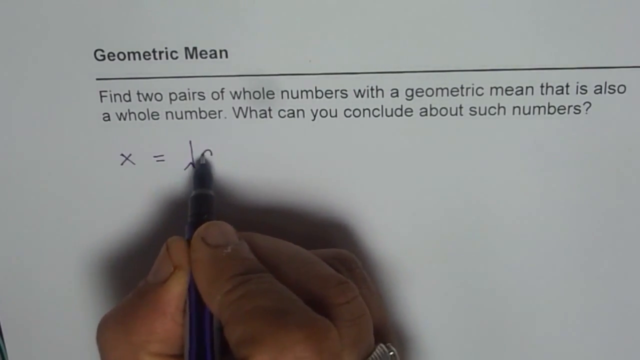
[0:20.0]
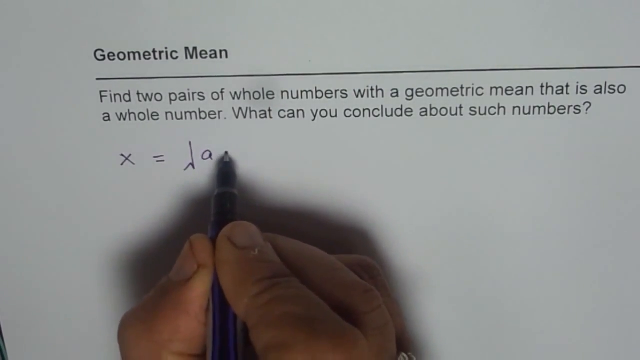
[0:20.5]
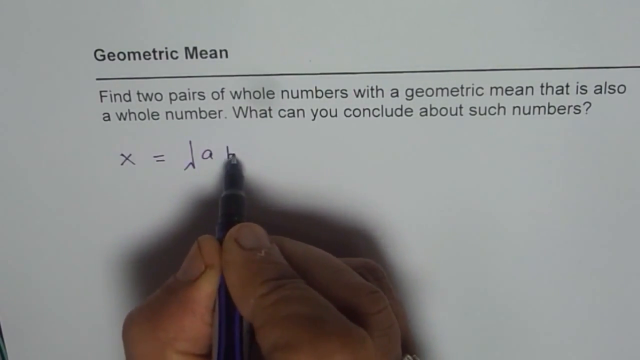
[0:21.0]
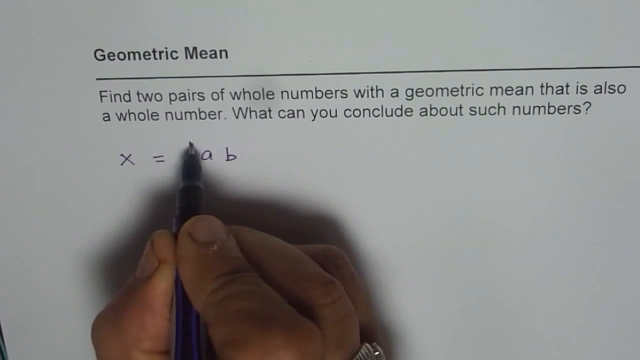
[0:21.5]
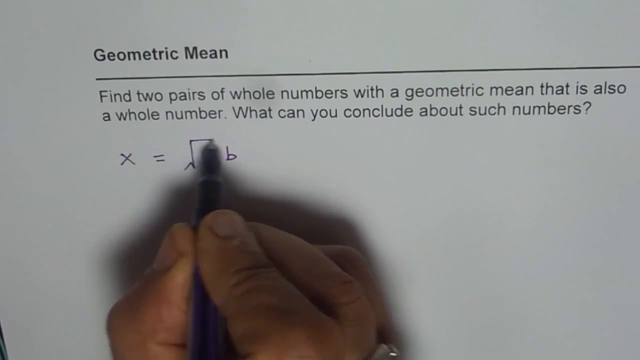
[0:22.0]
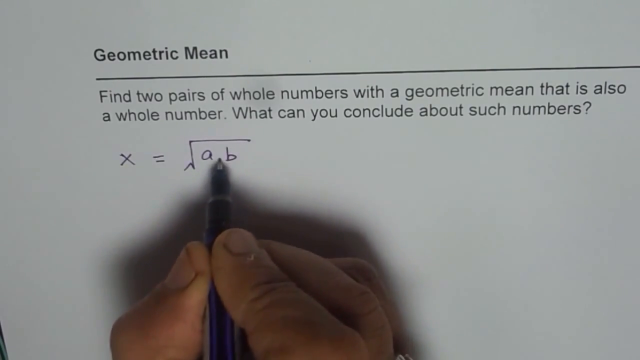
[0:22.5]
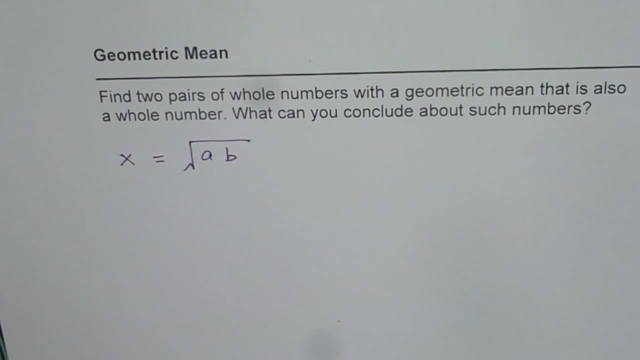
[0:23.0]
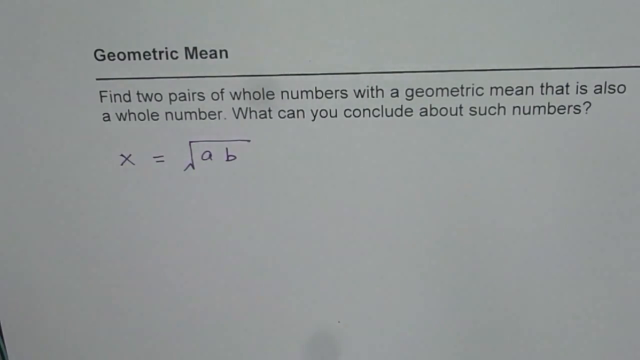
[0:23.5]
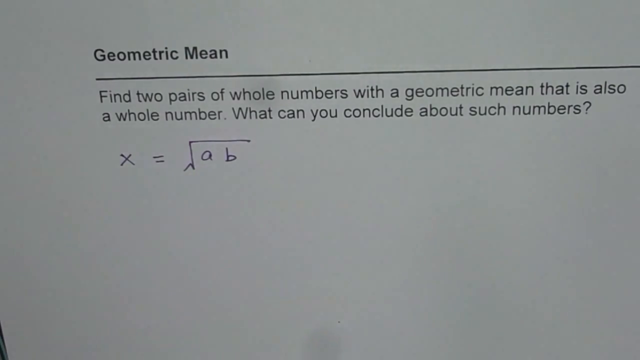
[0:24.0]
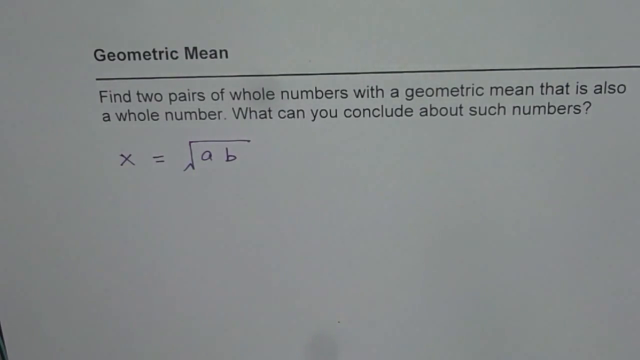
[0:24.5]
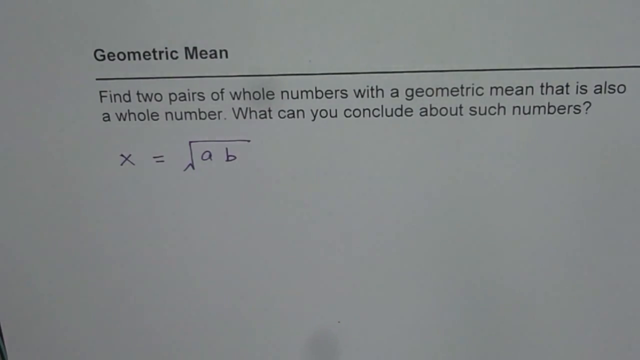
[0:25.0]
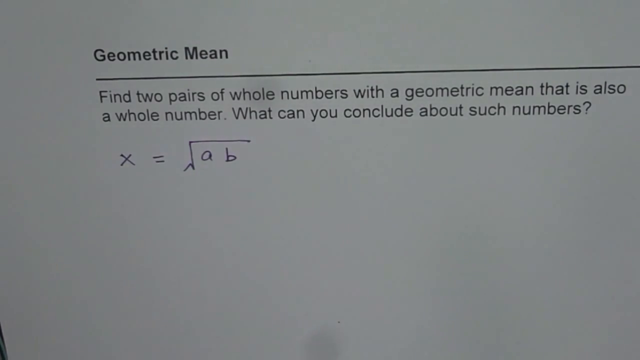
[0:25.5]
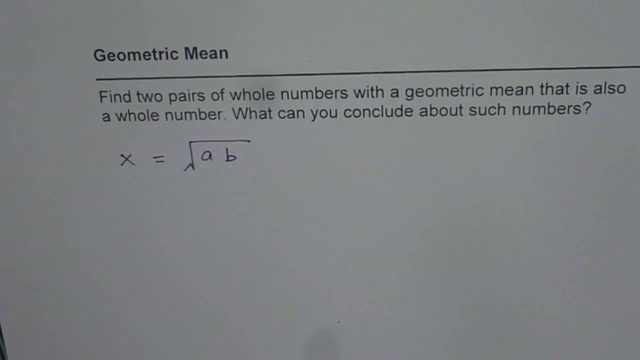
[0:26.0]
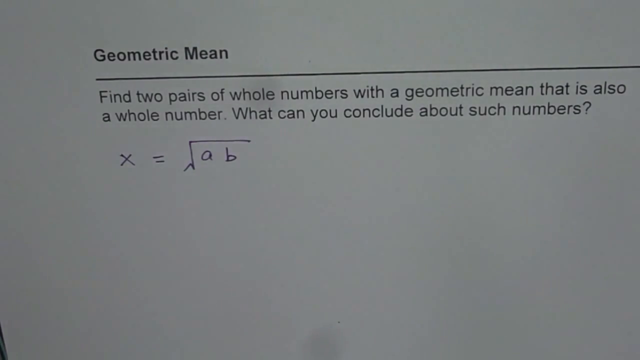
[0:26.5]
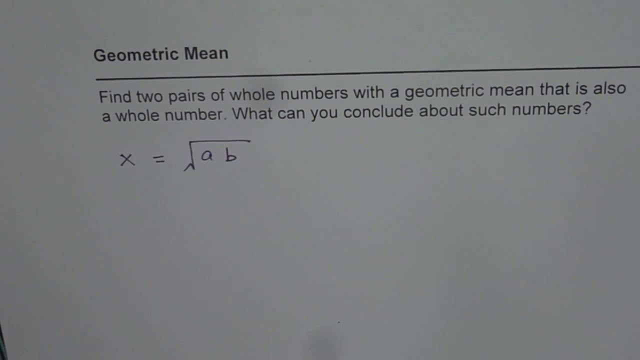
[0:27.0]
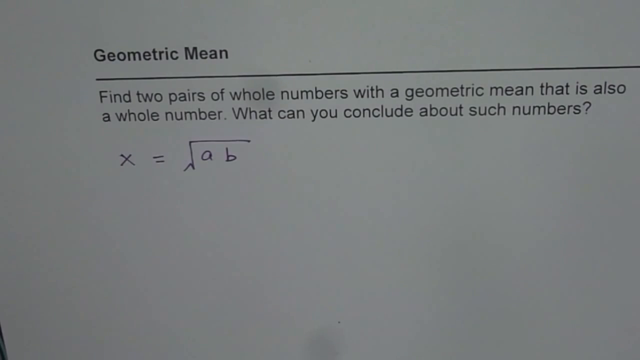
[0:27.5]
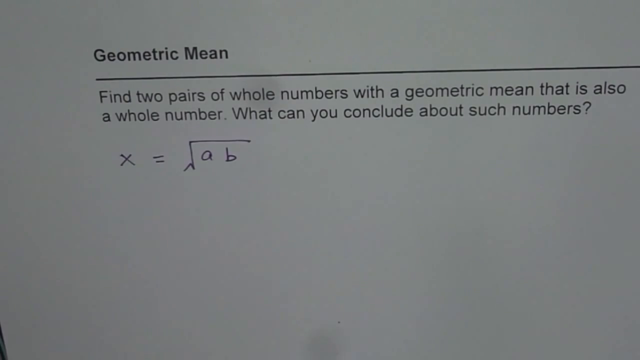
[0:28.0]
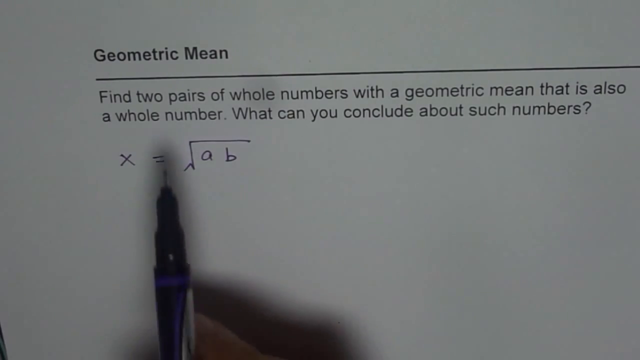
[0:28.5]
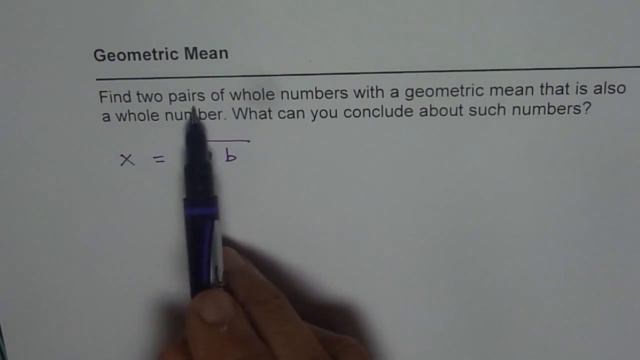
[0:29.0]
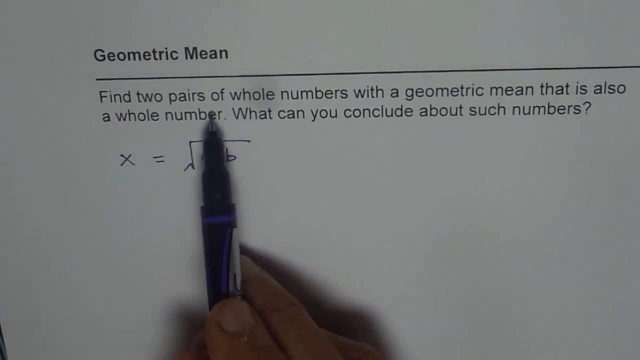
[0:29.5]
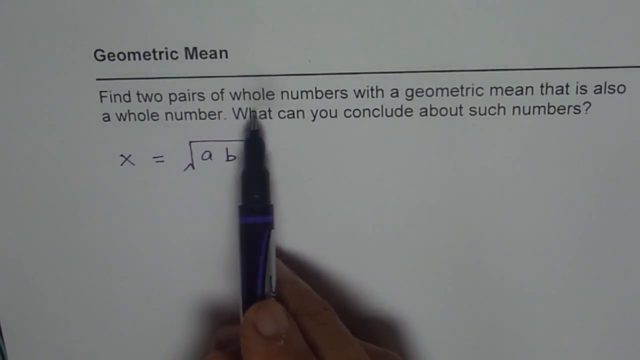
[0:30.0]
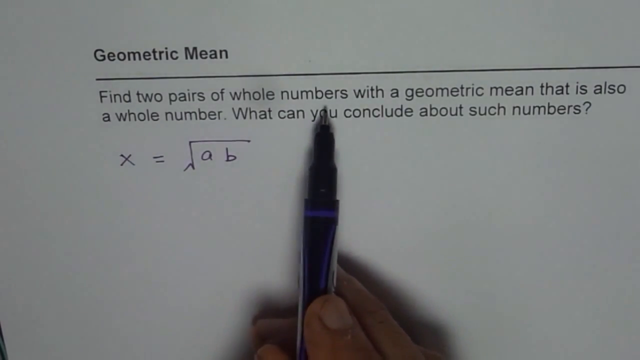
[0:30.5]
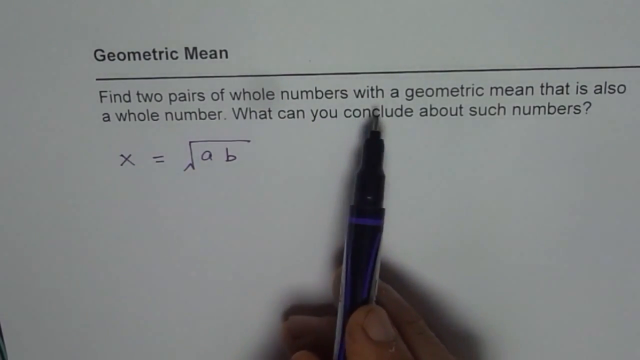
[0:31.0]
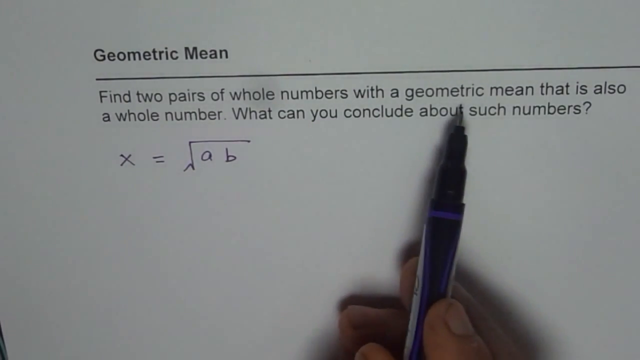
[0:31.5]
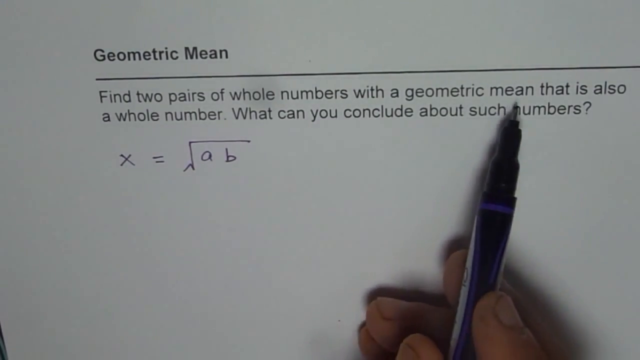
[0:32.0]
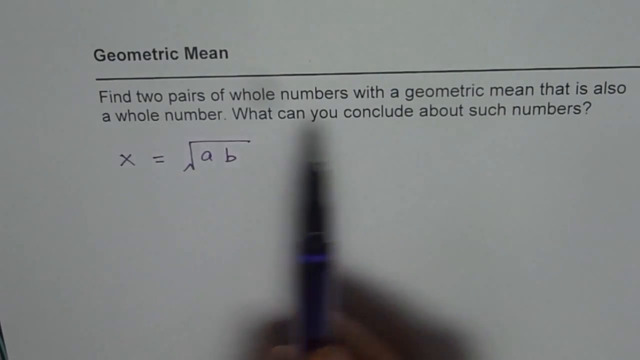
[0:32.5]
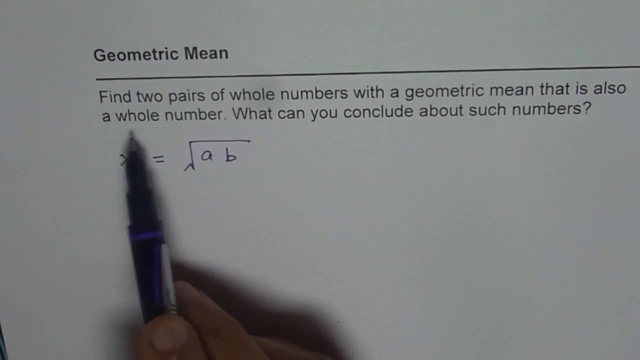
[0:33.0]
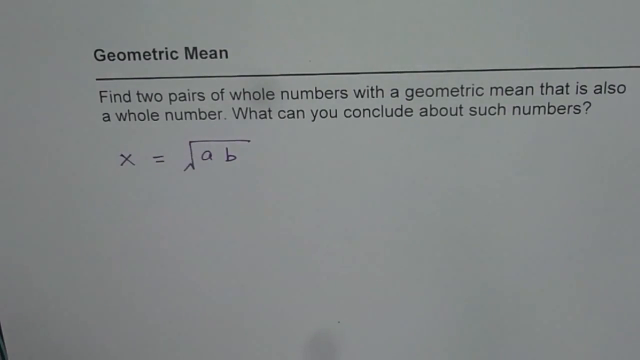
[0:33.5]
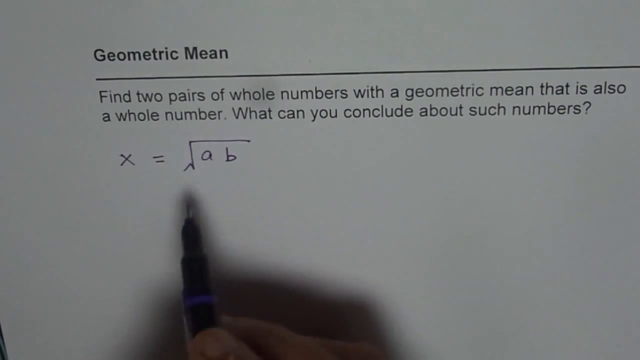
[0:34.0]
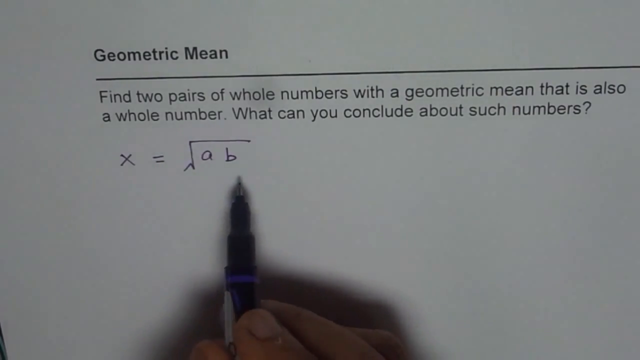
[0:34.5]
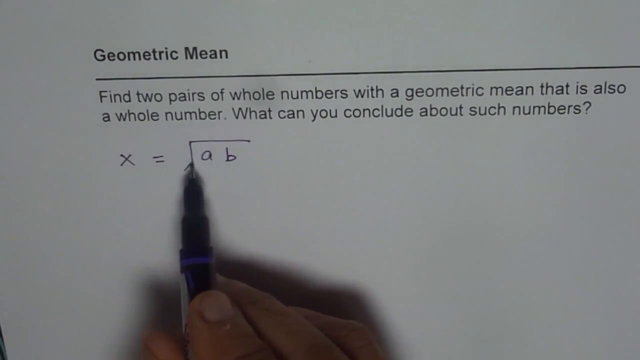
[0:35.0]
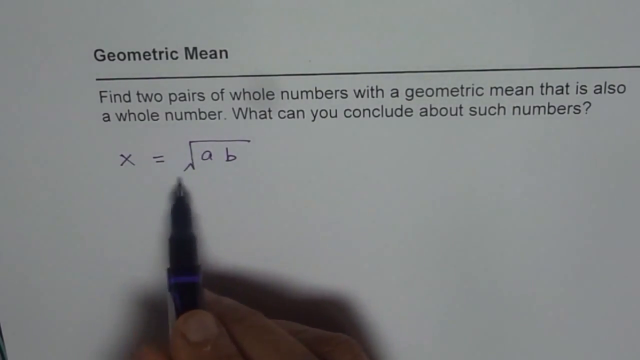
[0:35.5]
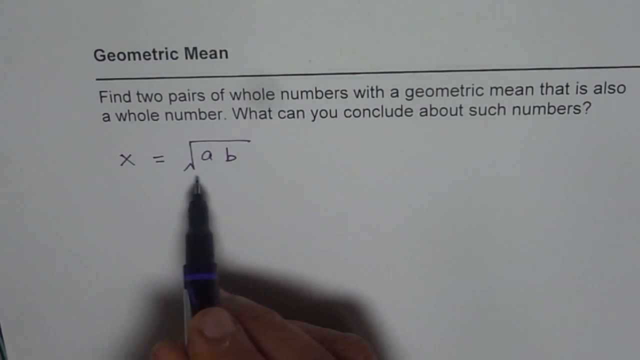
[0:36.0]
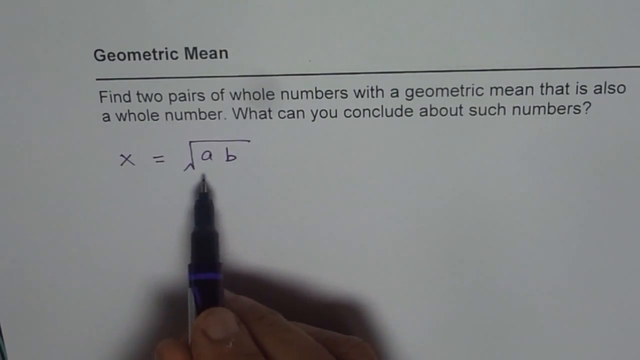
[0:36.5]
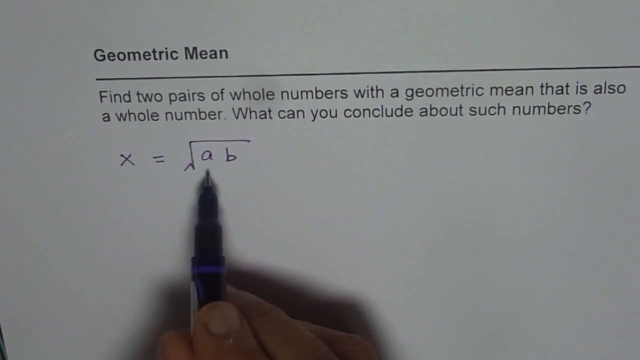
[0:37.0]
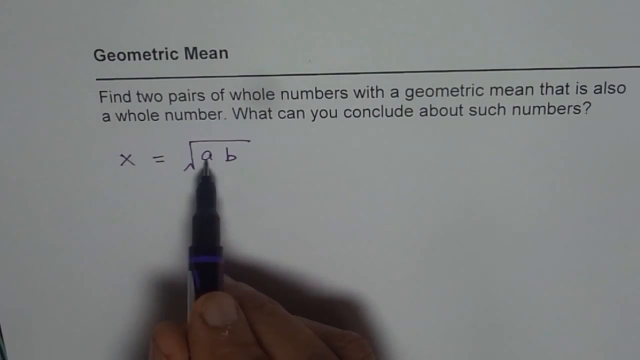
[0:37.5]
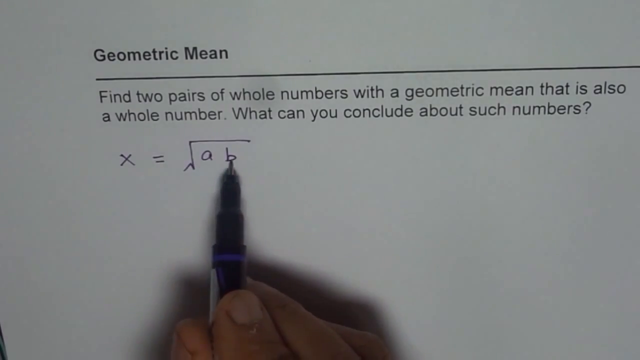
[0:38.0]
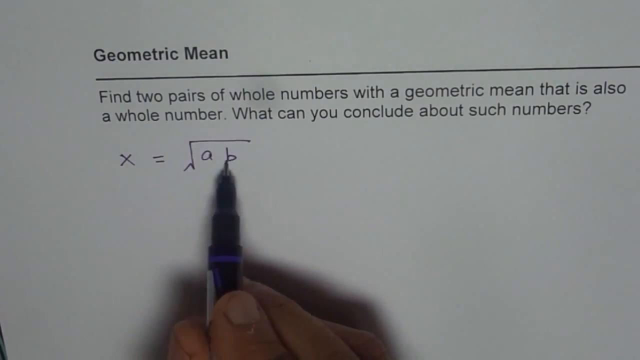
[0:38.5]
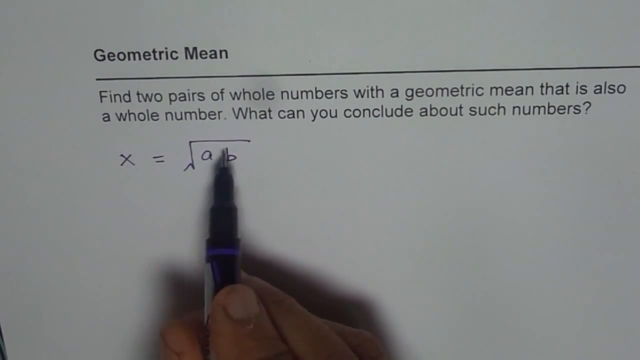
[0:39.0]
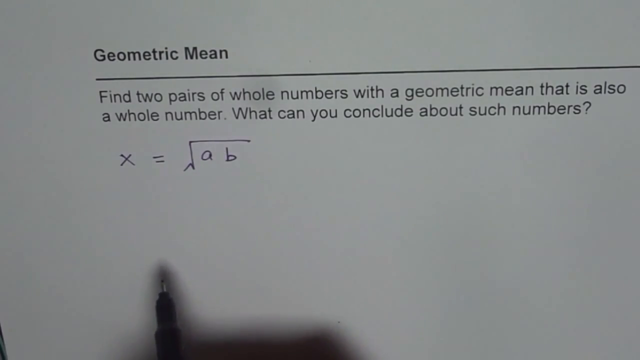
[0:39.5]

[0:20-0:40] A white paper with black text shows the words "geometric mean" in bold with a line below them, and less bold writing below with the math problem: "Find two pairs of whole numbers with a geometric mean that is also a whole number. What can you conclude about such numbers?" Below that is what looks to be a man's hand, with what could possibly be a ring or a watch lower on the hand; there is dirt under the fingernails and a cuticle problem on the pointer finger of the right hand. The hand holds a black pen with a purple stripe near the top and continues writing how to solve the equation. The hand and pen leave the screen for a moment and then come back, and the man again points out word for word the important parts of the math problem. He uses the pen to circle the A and the B that he has already written out, moves the pen back and forth between the written letters A and B, and then pulls the pen down out of the screen.